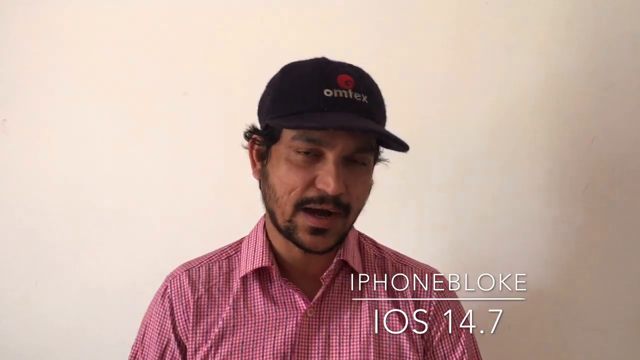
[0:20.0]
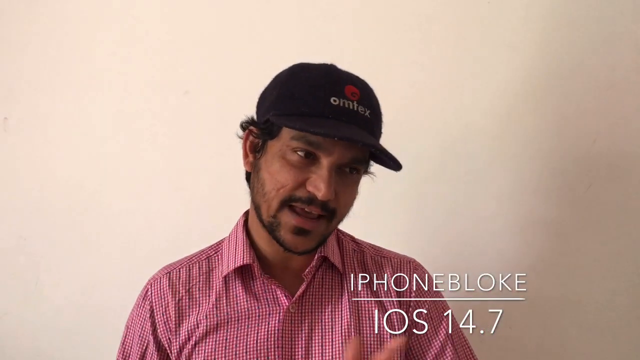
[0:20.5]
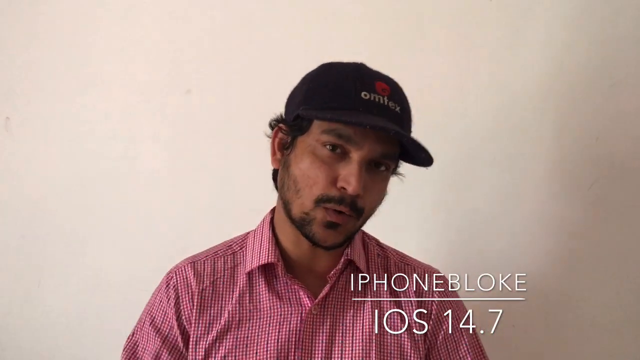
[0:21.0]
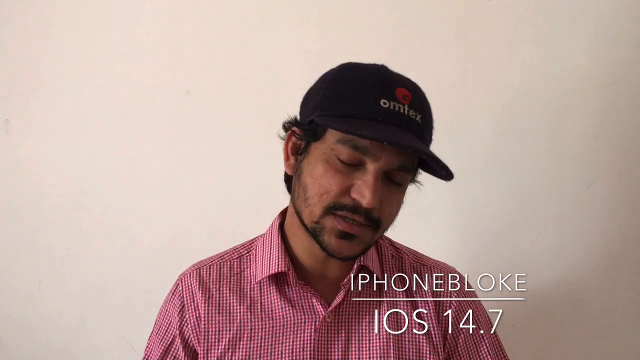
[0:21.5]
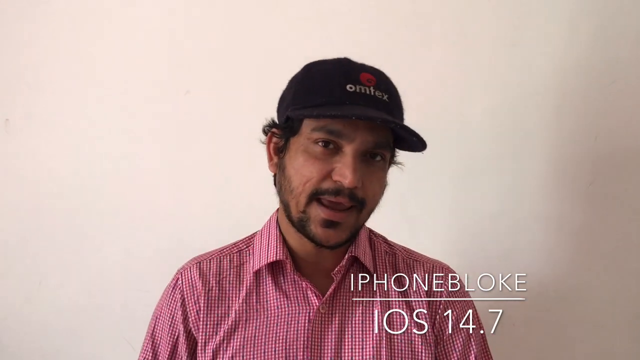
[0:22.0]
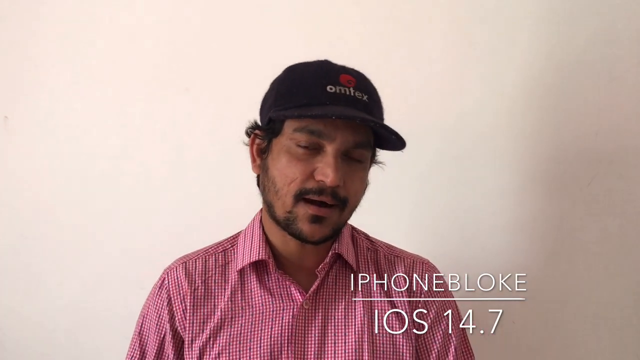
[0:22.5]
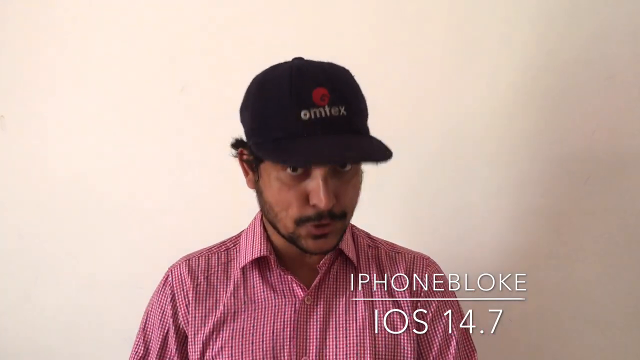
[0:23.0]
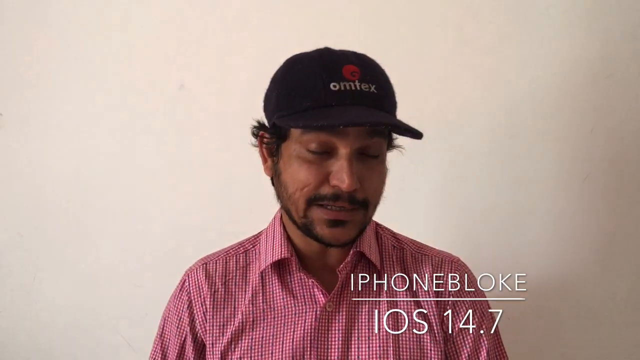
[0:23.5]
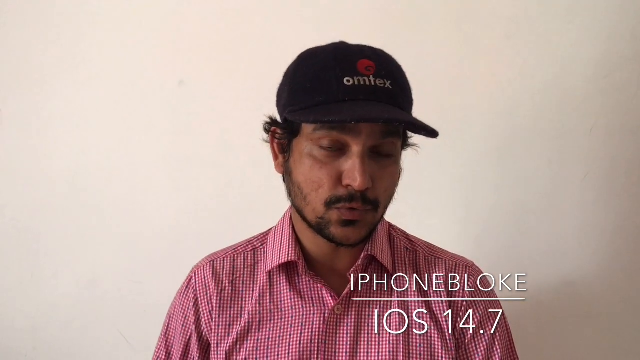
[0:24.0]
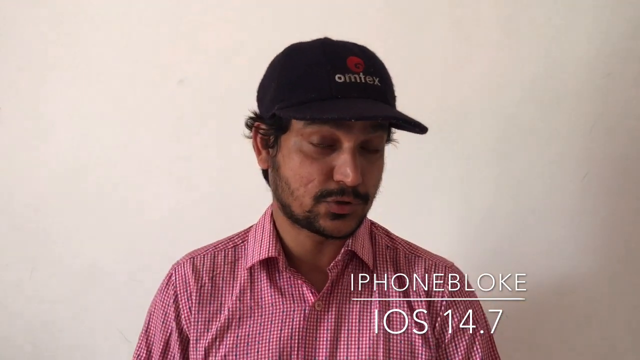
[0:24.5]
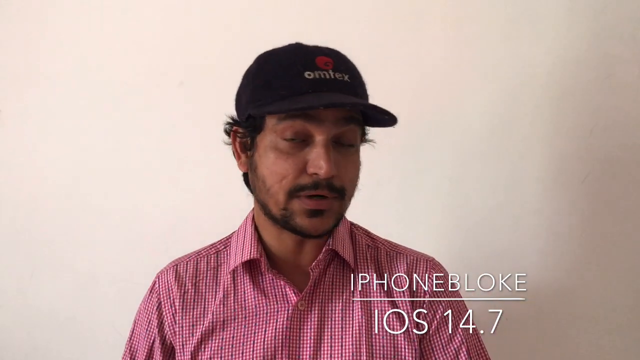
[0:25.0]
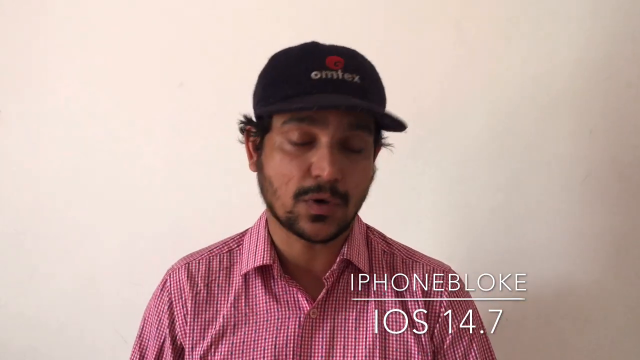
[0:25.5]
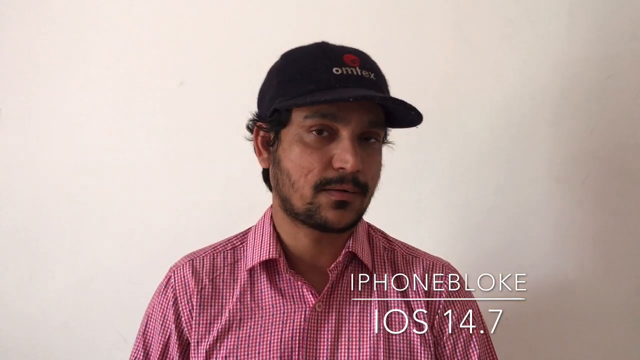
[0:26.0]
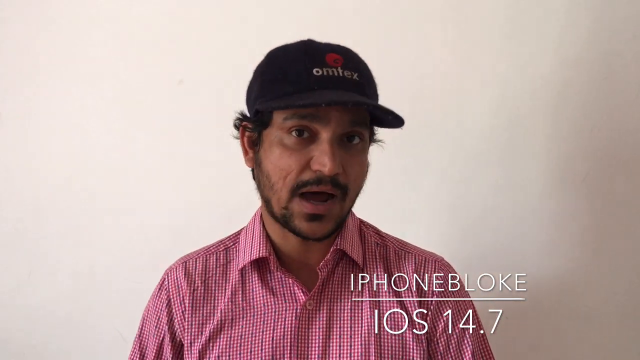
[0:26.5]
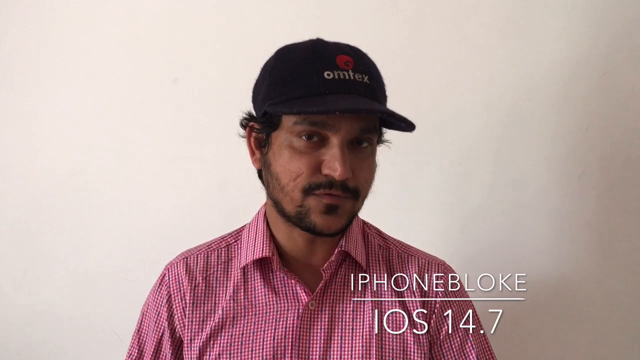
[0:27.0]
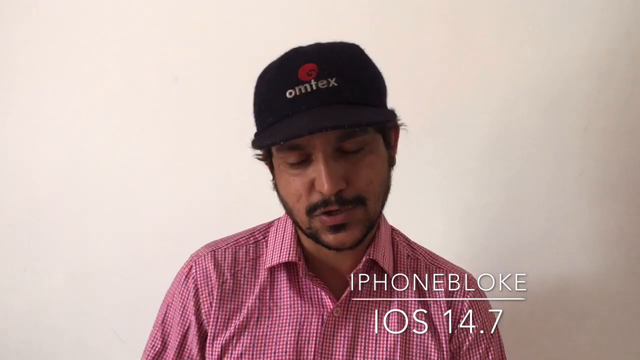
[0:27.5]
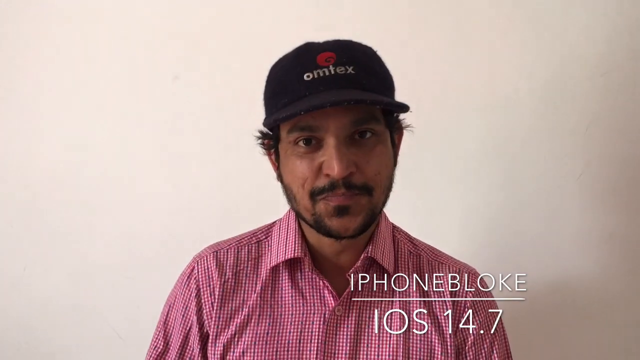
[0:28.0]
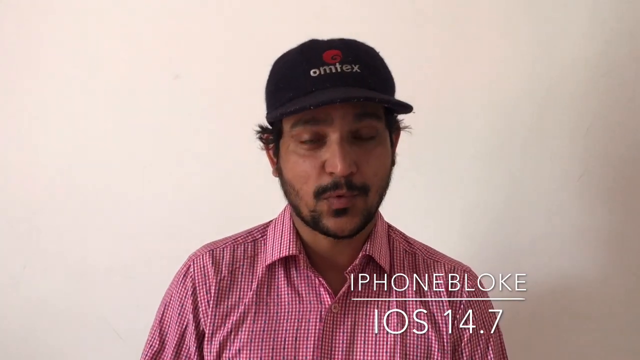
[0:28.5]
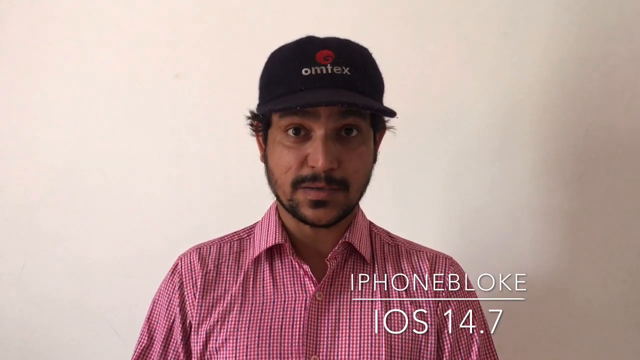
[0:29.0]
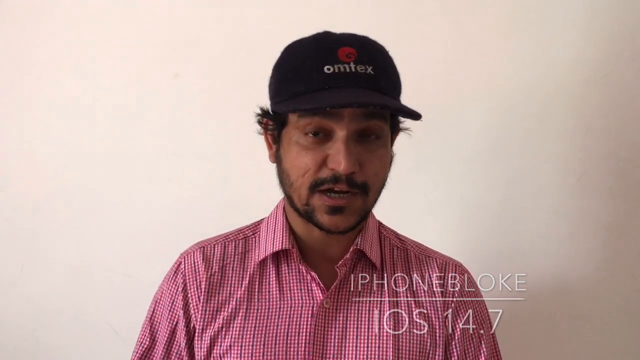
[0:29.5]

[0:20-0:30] The man talks with his head slightly tilted to the right, and the shadow on the right side of the wall moves a little. At one point his left hand comes up in a very quick movement, the fingers waving up from the bottom and going off toward the bottom on the left side. Keeping his head tilted slightly right, he then moves it straight and bends it down, closing his eyes in a very slow blink. As he talks, his mouth kind of pulls back very hard and his neck kind of strains. He leans forward, turns his head ever so slightly right again, glances down and looks up, taking a big sniff as he looks up. He says something fairly intently, then kind of brings his head back and kind of pulls his mouth in a little.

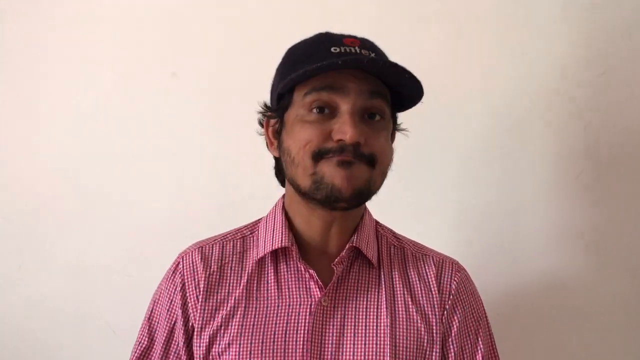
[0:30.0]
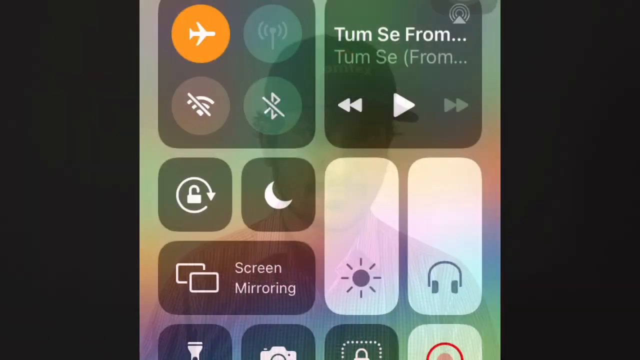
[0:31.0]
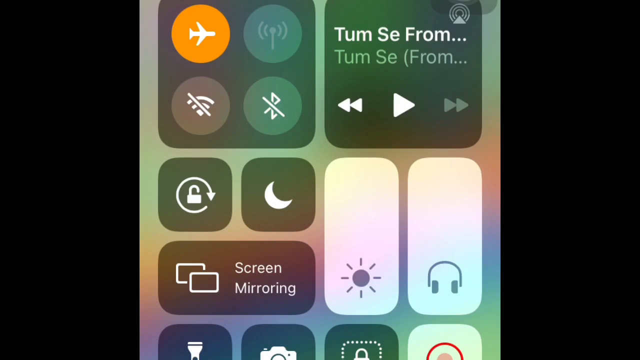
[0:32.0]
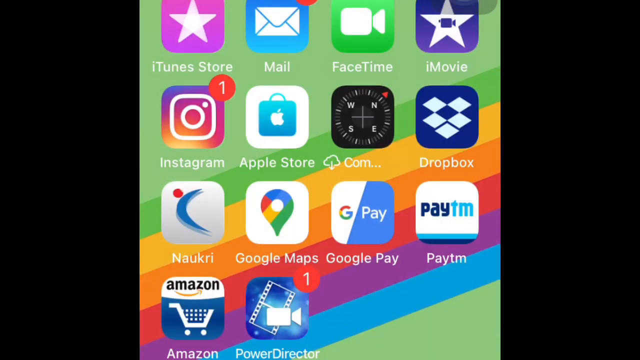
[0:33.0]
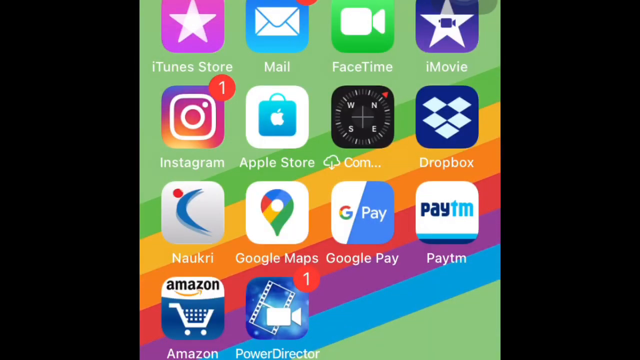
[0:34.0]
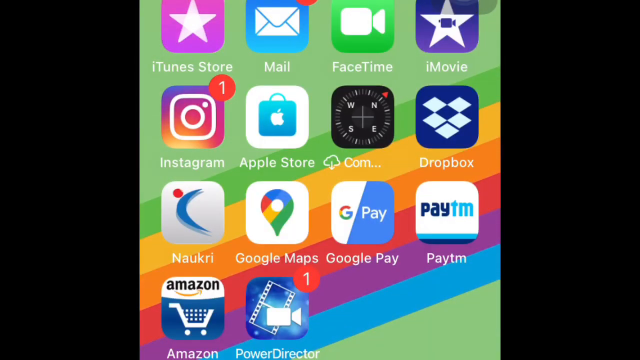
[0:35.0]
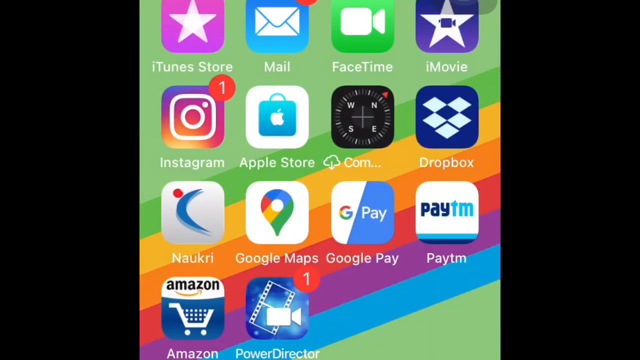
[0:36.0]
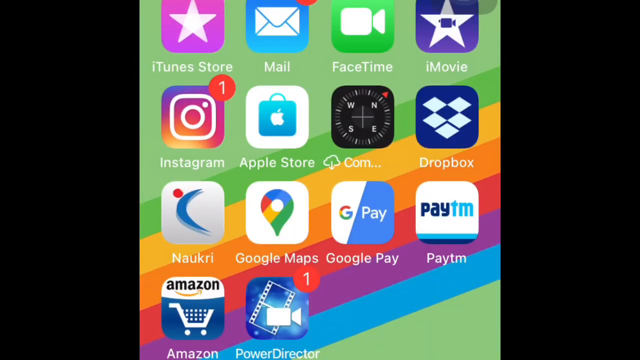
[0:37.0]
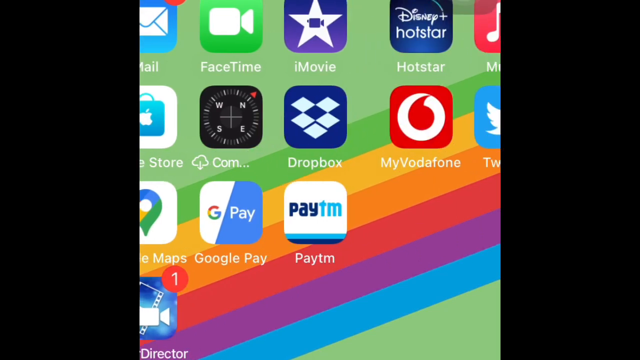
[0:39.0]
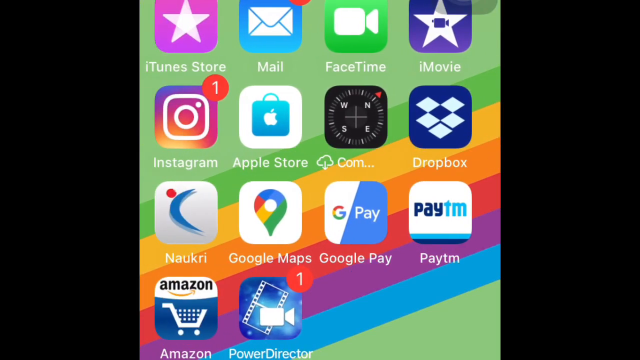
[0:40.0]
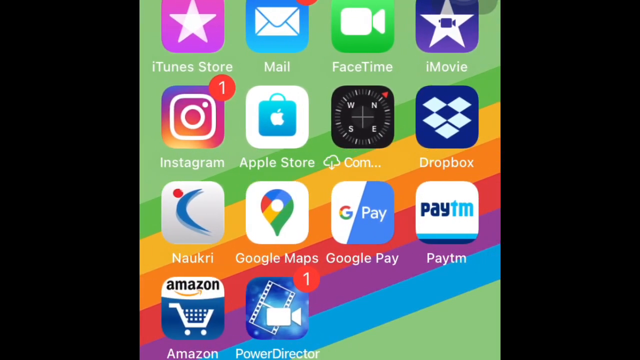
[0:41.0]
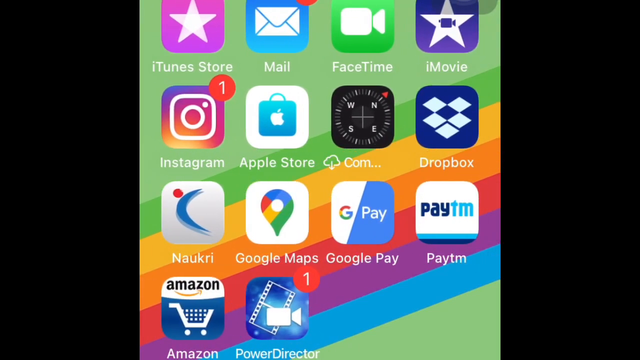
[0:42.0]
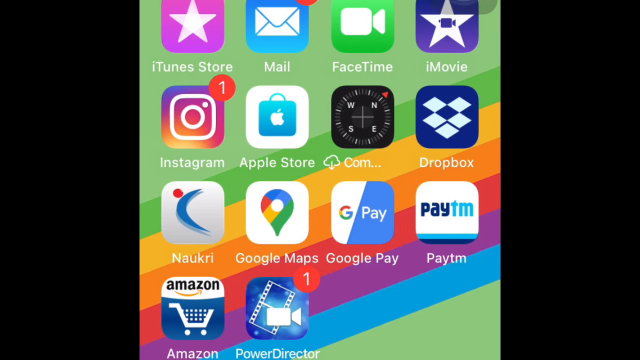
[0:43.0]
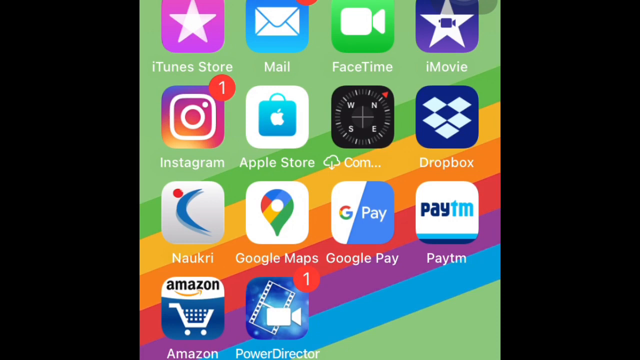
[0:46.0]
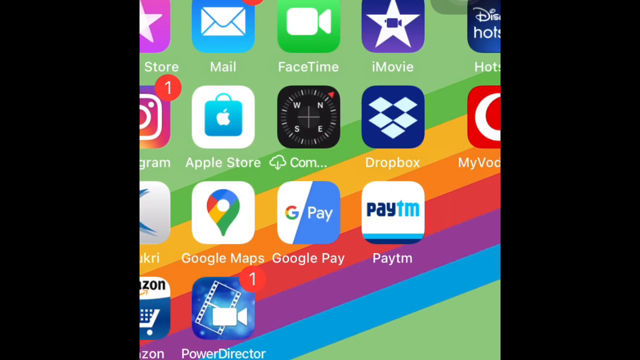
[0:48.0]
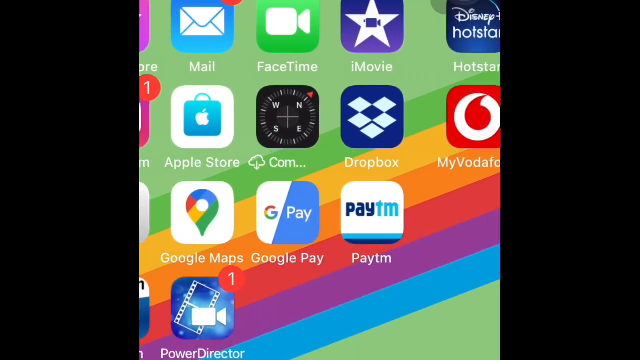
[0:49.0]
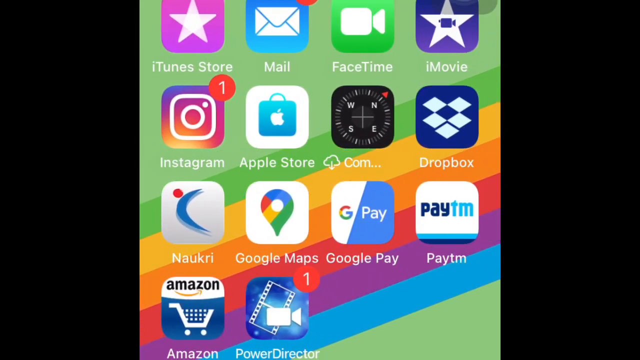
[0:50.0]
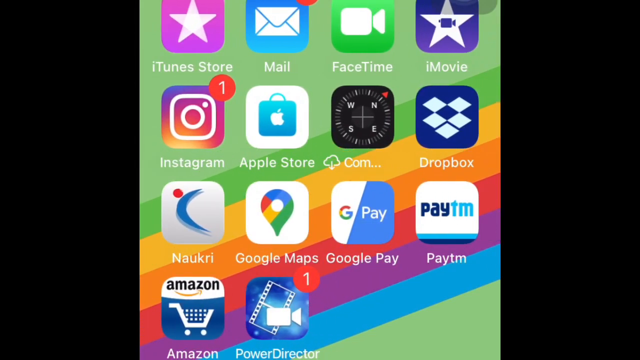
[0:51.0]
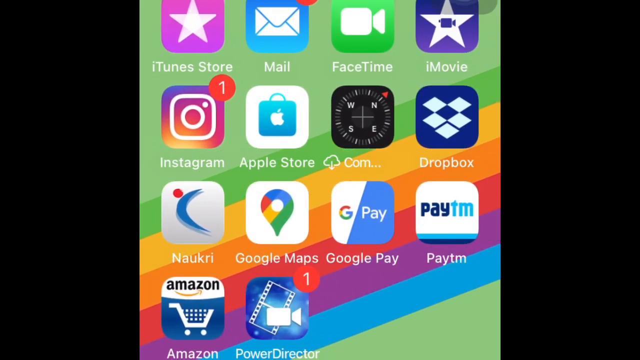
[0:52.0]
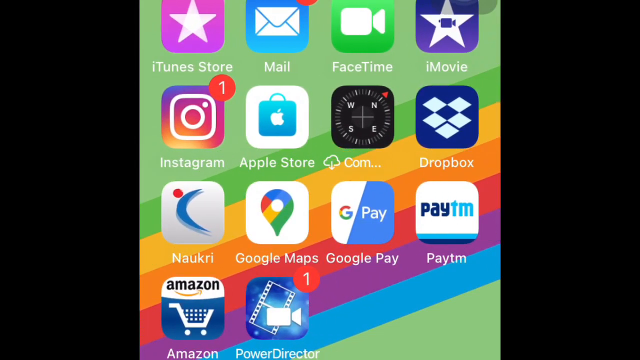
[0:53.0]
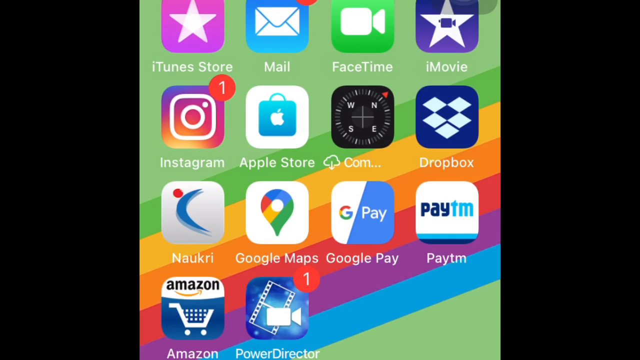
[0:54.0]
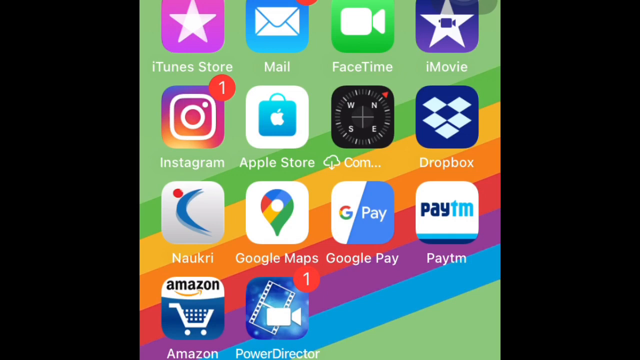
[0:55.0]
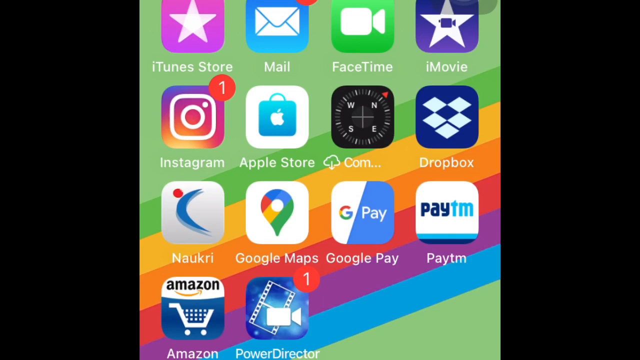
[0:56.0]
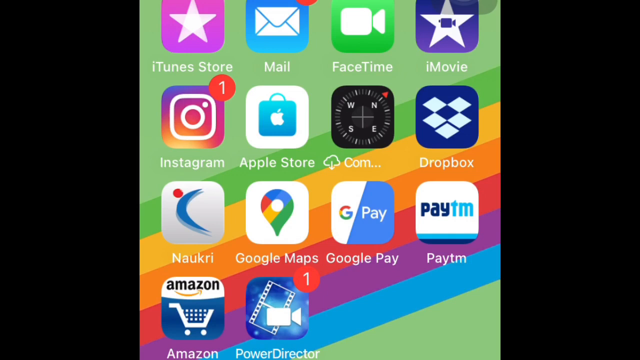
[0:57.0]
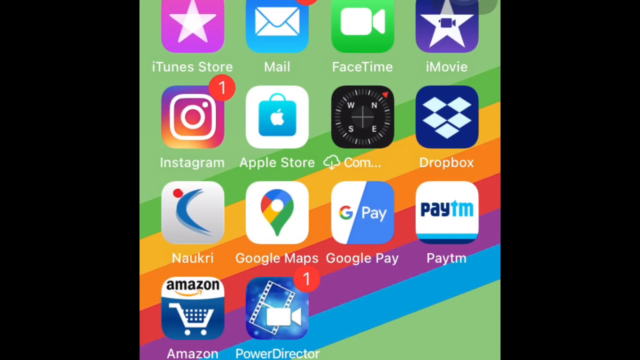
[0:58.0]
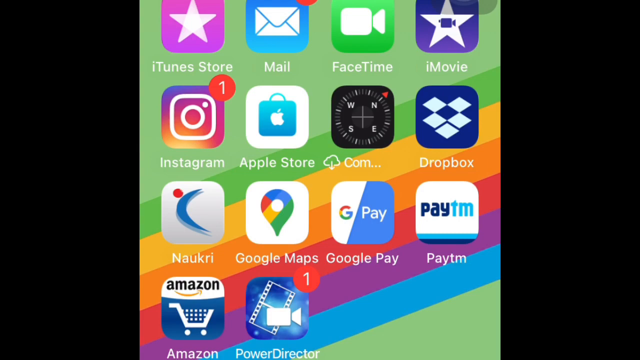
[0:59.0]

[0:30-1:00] Holding his mouth kind of tight, the man says something into the camera, and the video cuts to a close-up of what is not really a phone but an outline of one, with a light-colored, almost tannish border. At the top left is a square with airplane mode, Wi-Fi below it, an icon of a rod going up with a circle on top and two waves coming off the sides, and Bluetooth. To the right of that is a little square playing a song, and there are two little squares underneath the big square on the left side. Below that is screen mirroring, and to the left are two white rectangles, the first with a little sun ray on it and the one on the right with headphones. The view scrolls down to a page of apps: four across the top, three rows down, and two in the bottom row, including what look like Instagram, Amazon, email, FaceTime and iTunes. The screen kind of jiggles back and forth as if about to scroll right but does not, pulling back two or three times before staying on the one background; it then acts as if it will pull left and right two or three more times before returning to the static view of the apps. The background has a light green area coming from the right corner about two inches down and angling down to just past the left side at the midway point, with a thinner dark green band below, then light orange, dark orange, red, purple, blue, and light blue in the bottom right corner. The view then scrolls to the right two times, to a page with about eight apps and then to a page with no apps.